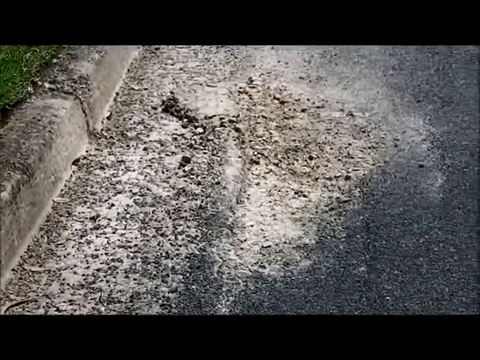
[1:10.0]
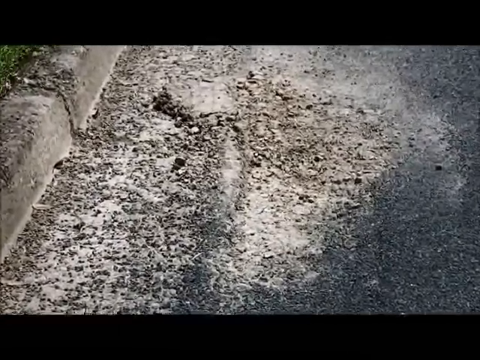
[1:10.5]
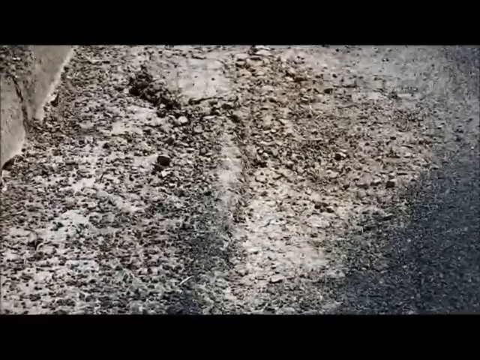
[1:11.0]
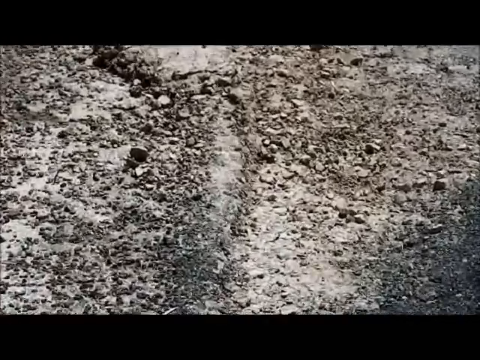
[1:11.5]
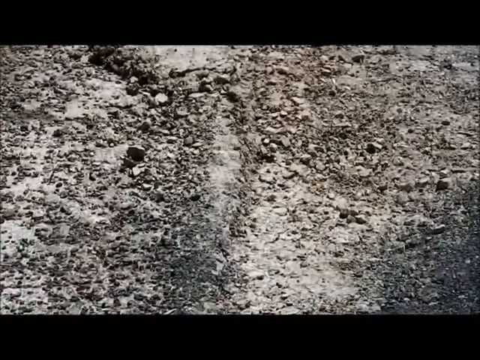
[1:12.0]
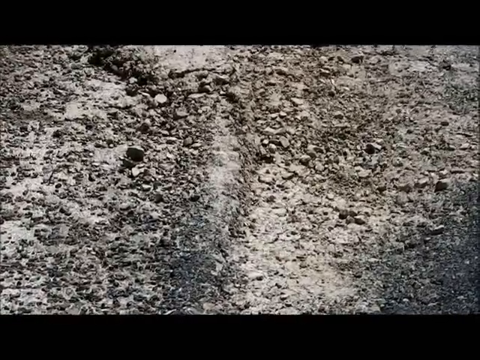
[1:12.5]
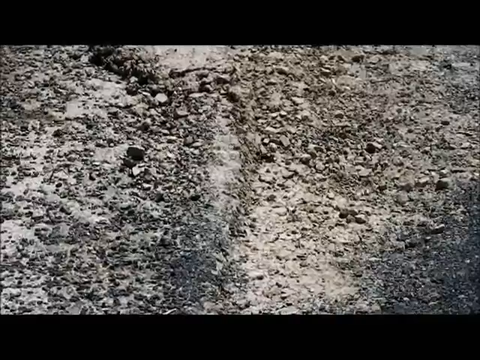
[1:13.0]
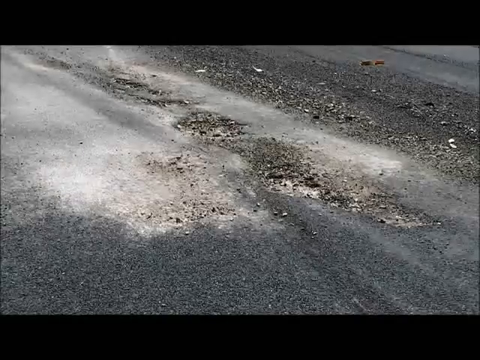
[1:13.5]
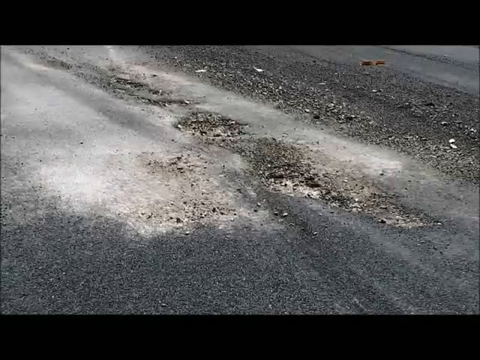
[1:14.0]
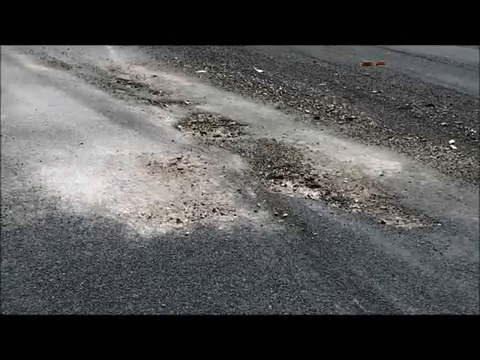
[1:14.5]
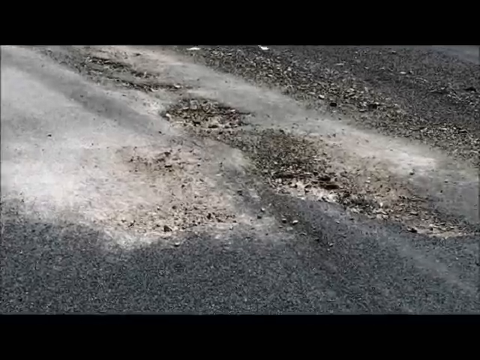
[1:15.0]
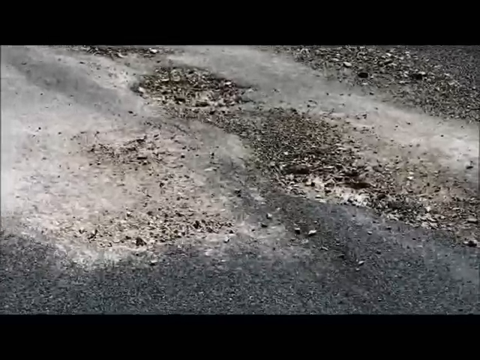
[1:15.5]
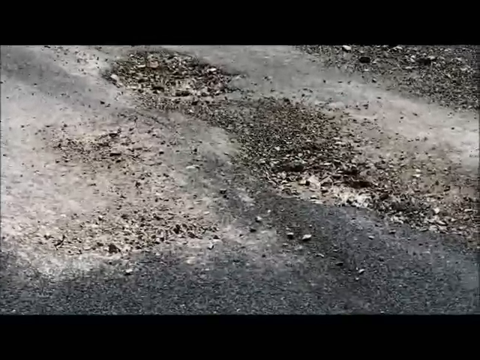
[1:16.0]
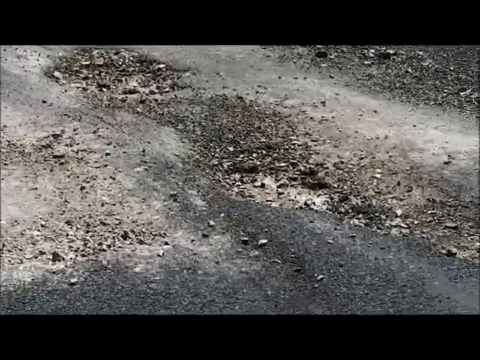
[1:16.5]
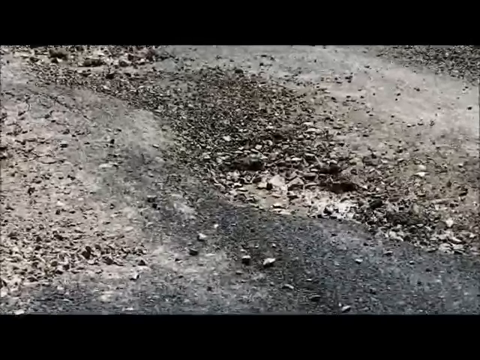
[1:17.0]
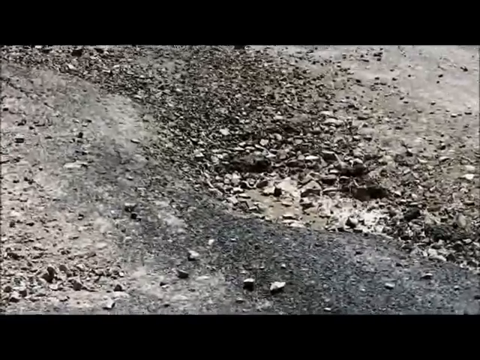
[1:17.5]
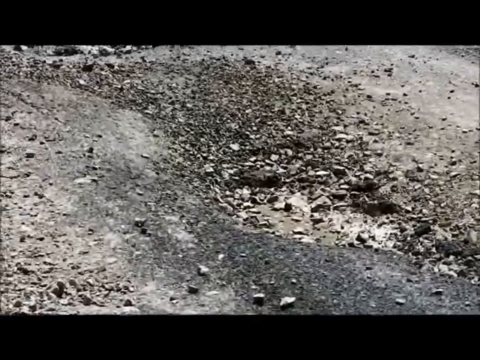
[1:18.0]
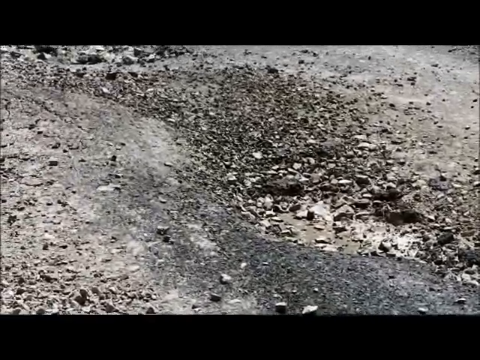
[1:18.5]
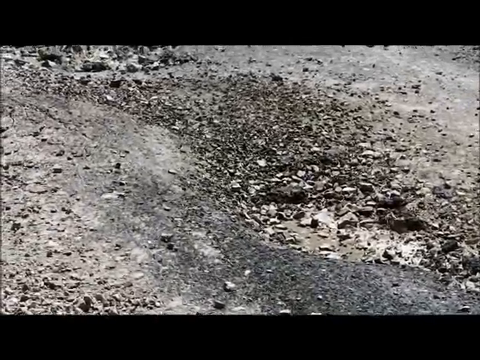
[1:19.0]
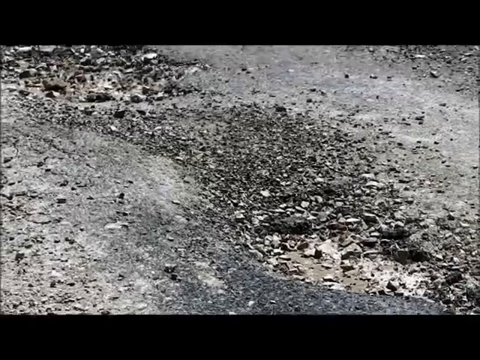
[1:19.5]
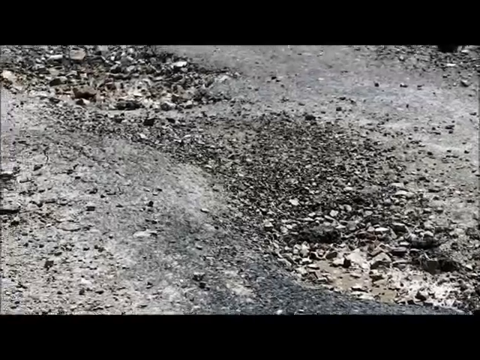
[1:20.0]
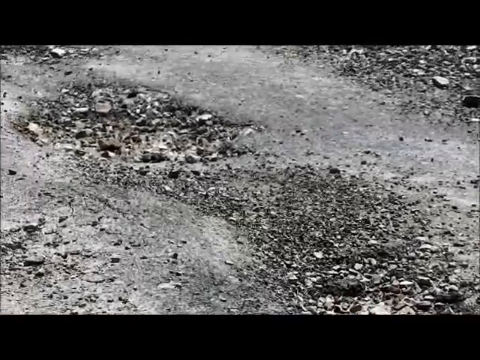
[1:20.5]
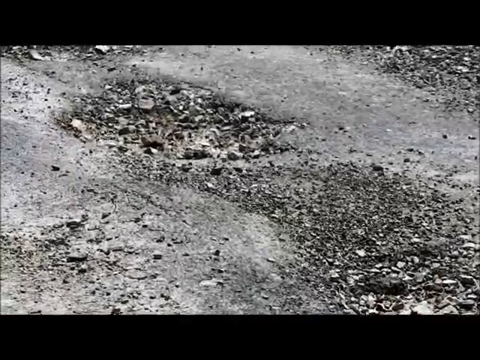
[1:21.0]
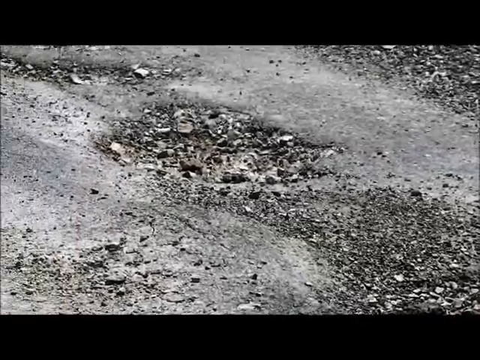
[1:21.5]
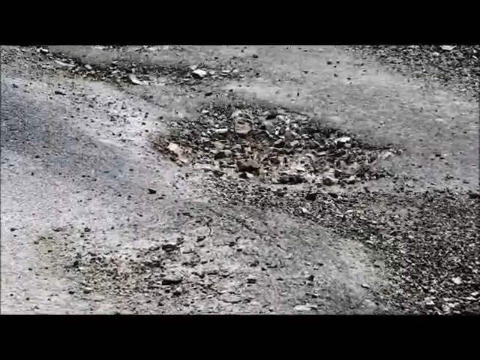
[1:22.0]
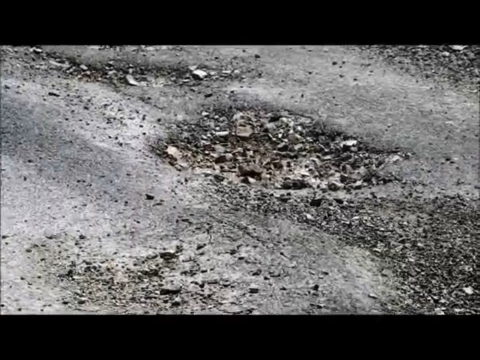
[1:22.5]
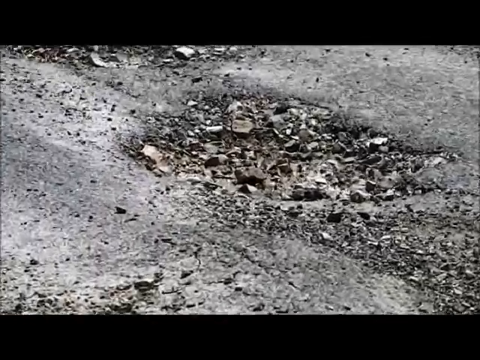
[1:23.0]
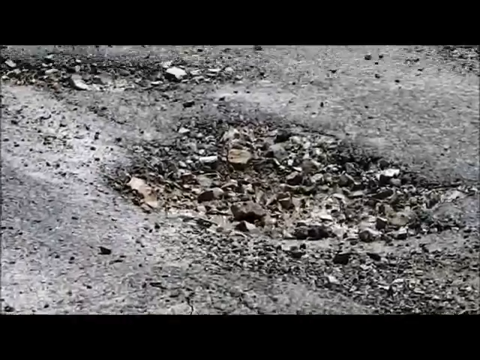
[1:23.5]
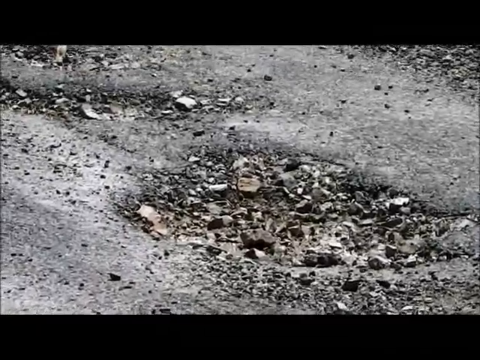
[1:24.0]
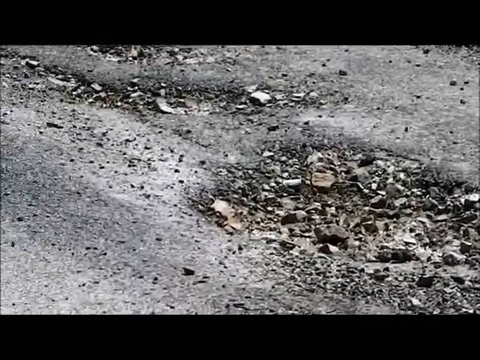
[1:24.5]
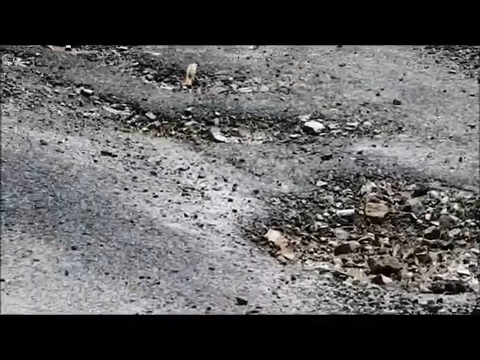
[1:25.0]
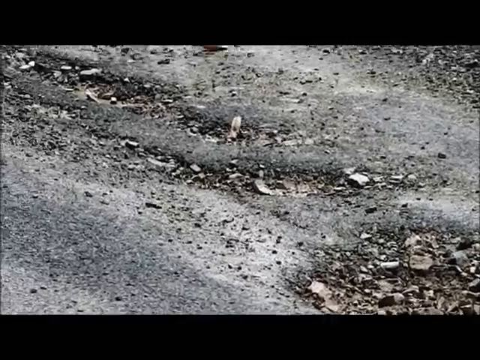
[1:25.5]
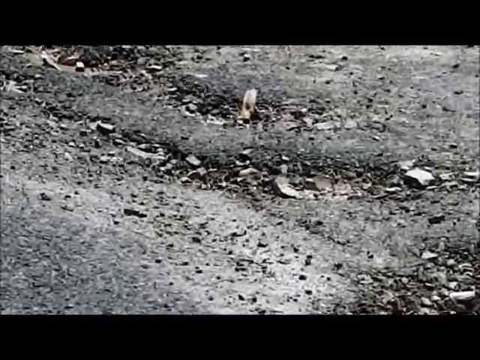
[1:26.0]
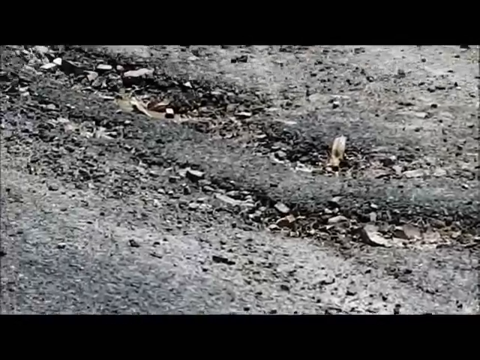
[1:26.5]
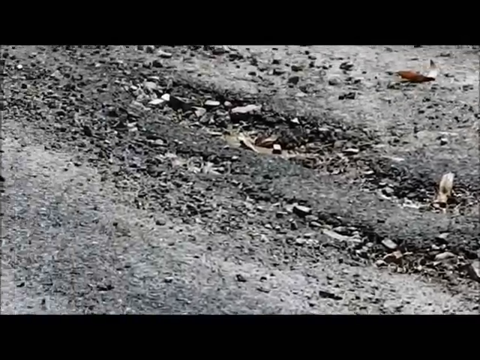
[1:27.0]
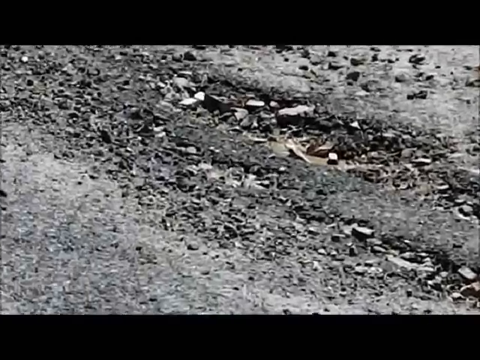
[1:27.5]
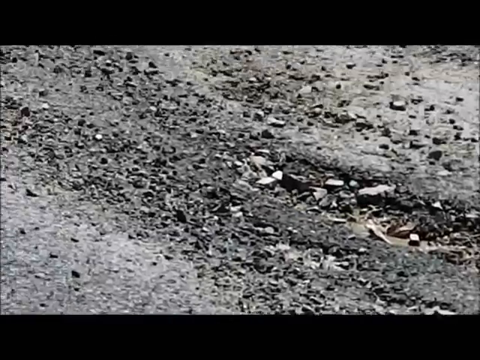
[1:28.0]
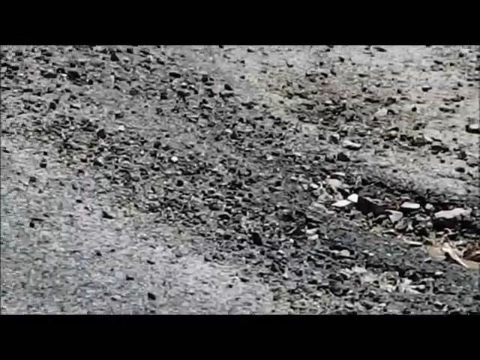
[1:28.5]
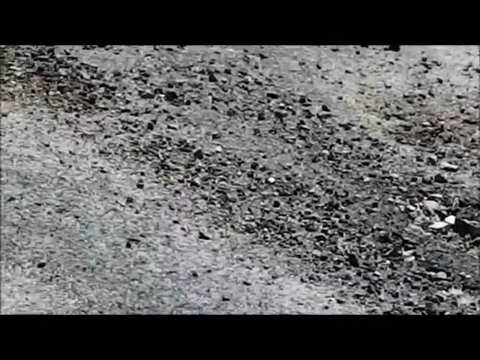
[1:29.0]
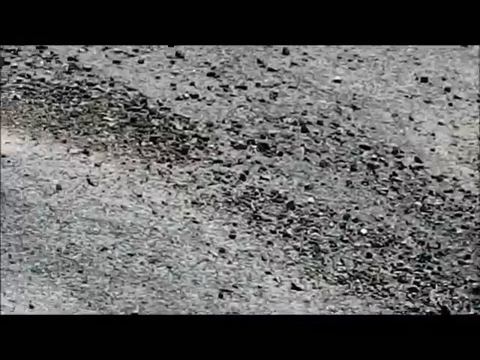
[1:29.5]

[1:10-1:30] The view zooms in closer to the road, then shows another view of the road and zooms in again on severely damaged areas. These areas look like clusters of broken-up rocks and stones and look very rough. The camera keeps zooming in very close on different badly damaged areas, where broken pieces of the road lie like a whole bunch of rocks. The road has multiple colors: some areas look very white and chalky, others very dark gray. The road's surface looks like large clusters of rocks.